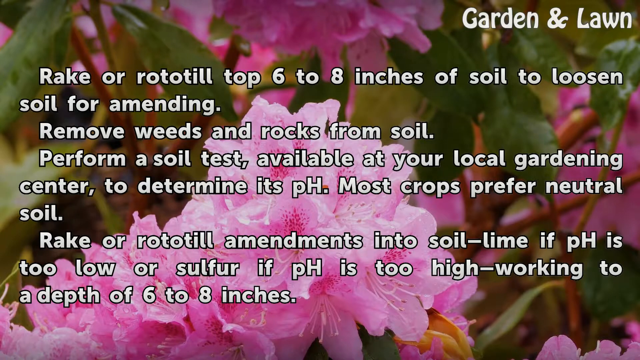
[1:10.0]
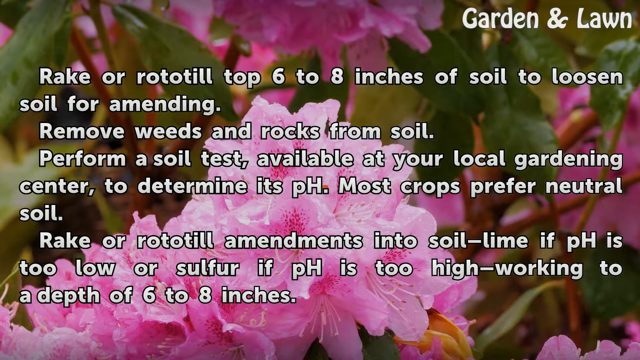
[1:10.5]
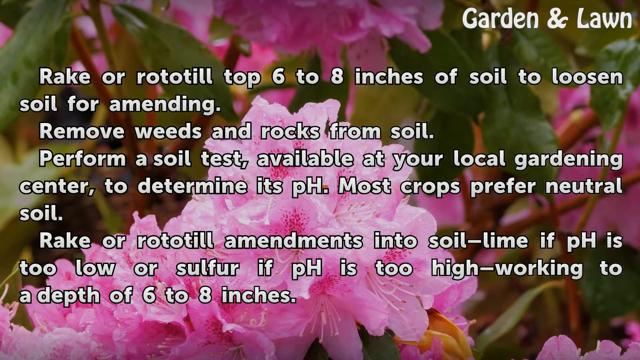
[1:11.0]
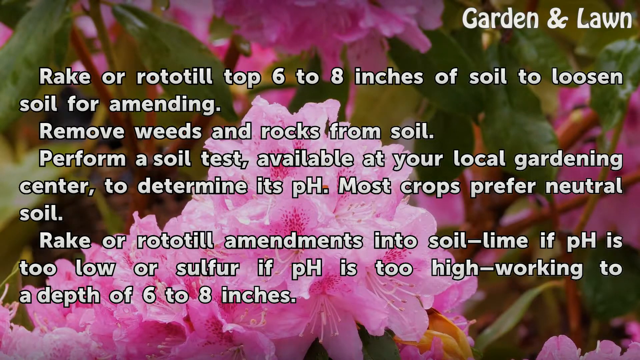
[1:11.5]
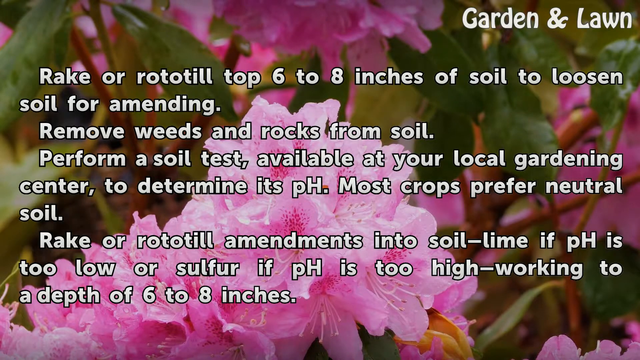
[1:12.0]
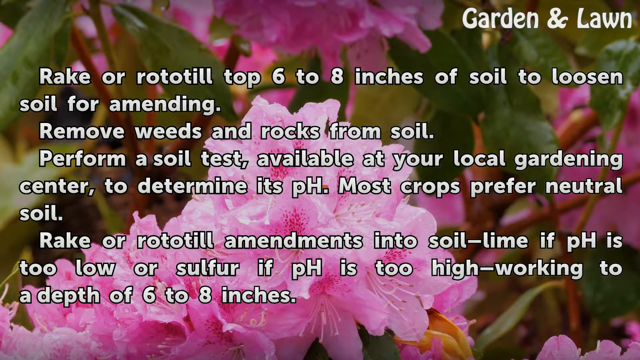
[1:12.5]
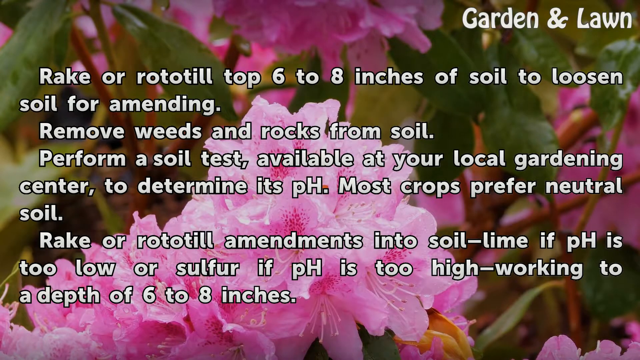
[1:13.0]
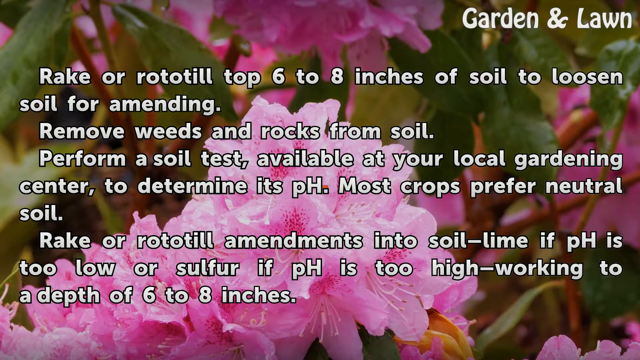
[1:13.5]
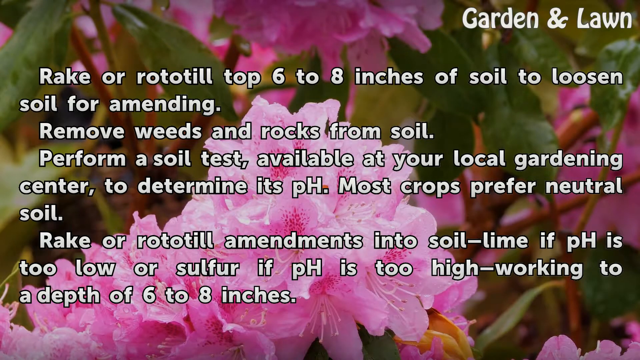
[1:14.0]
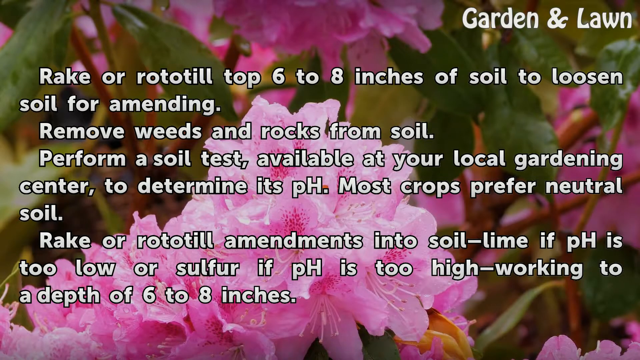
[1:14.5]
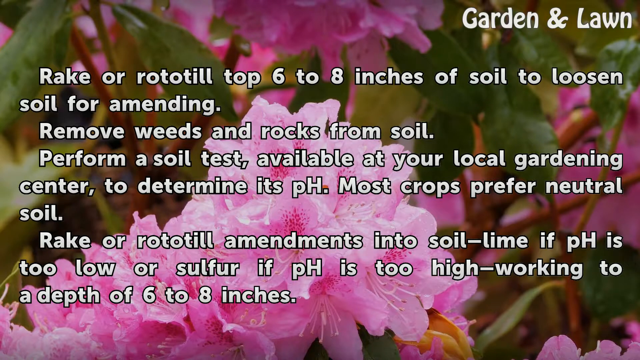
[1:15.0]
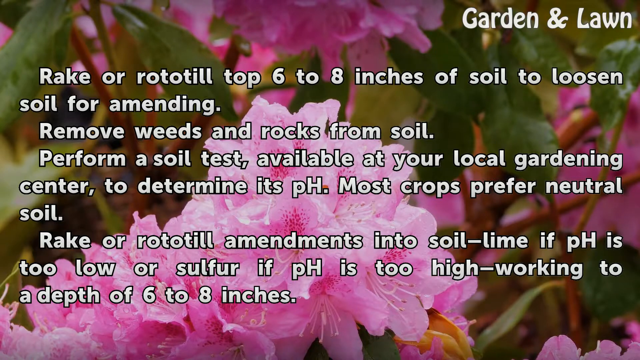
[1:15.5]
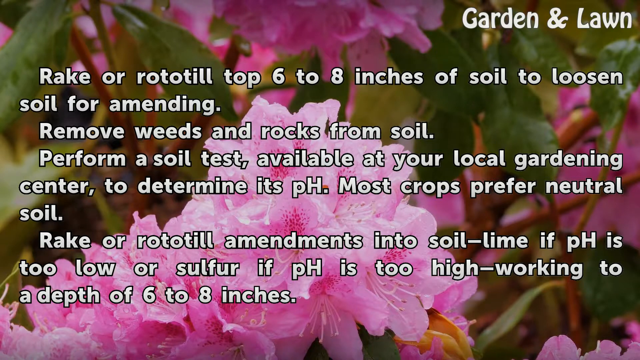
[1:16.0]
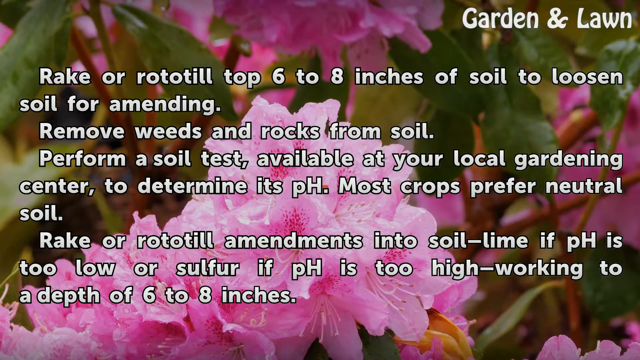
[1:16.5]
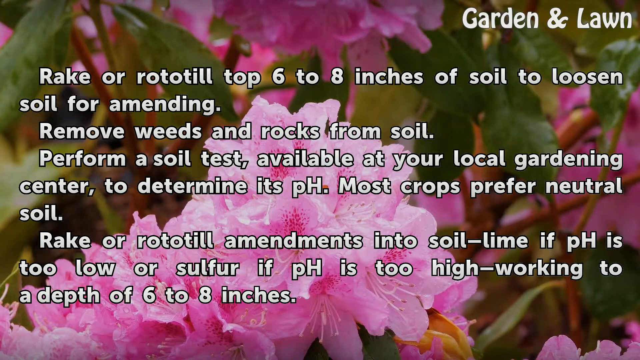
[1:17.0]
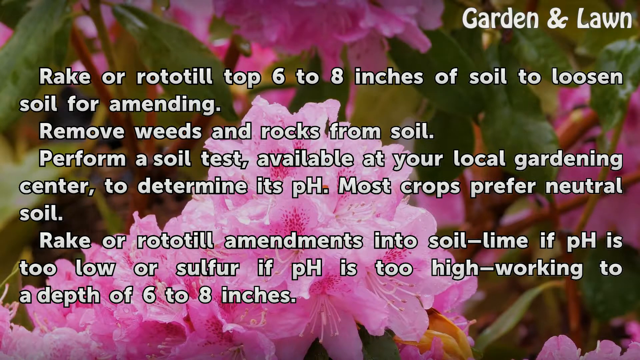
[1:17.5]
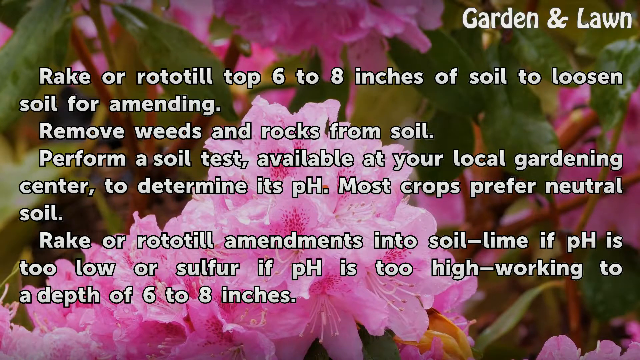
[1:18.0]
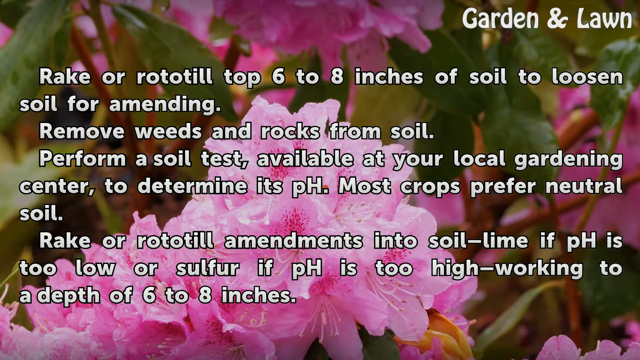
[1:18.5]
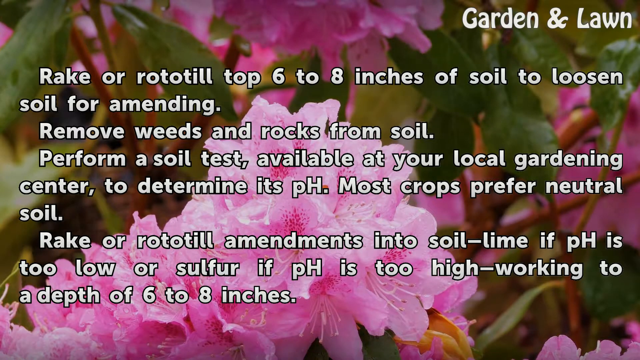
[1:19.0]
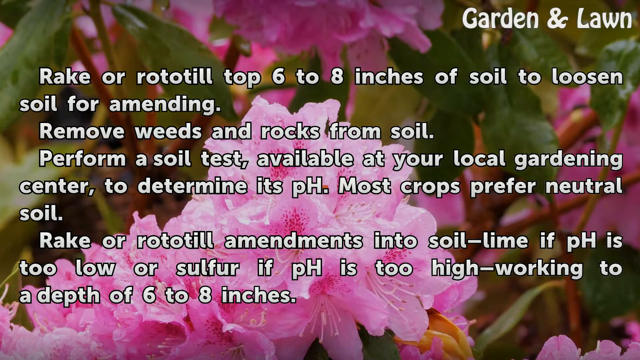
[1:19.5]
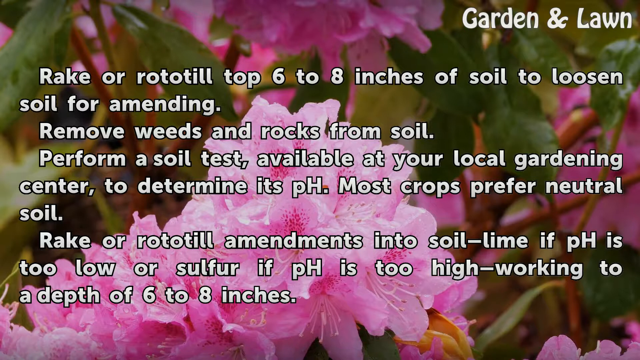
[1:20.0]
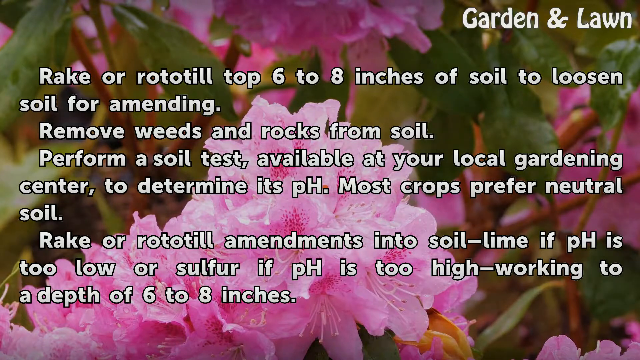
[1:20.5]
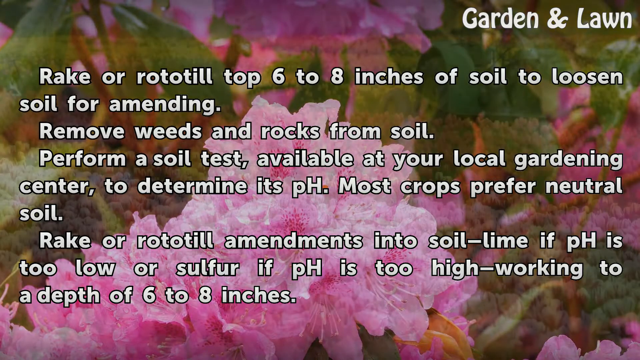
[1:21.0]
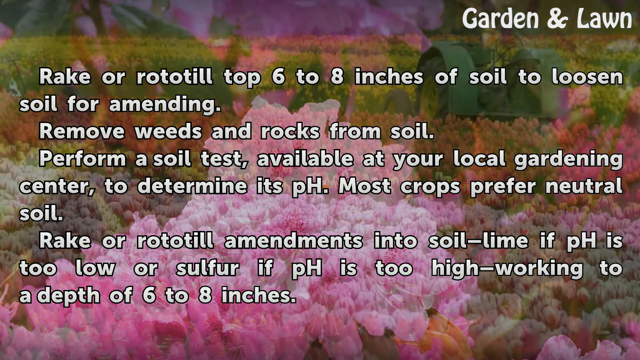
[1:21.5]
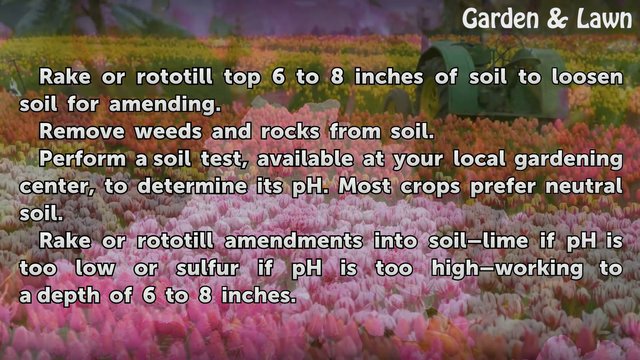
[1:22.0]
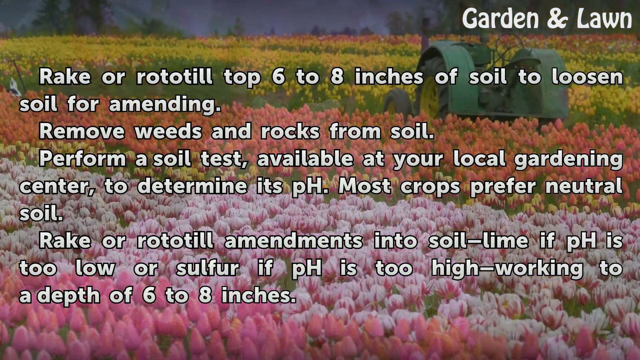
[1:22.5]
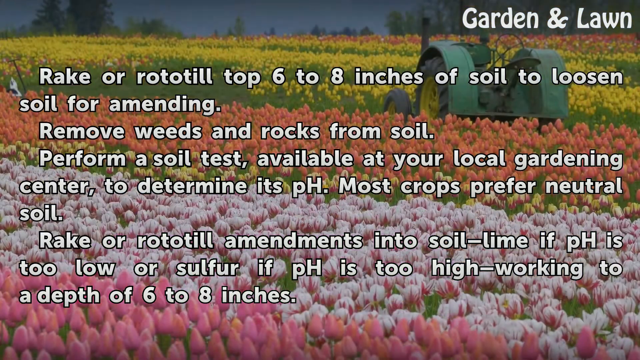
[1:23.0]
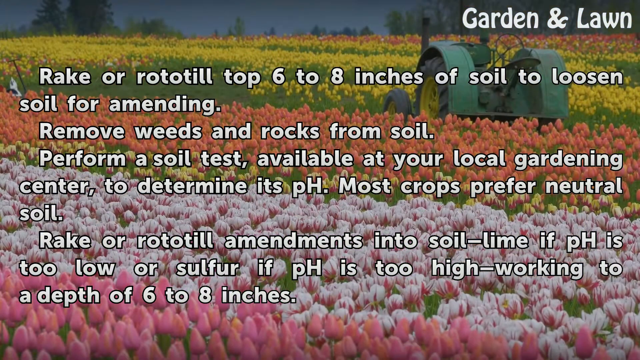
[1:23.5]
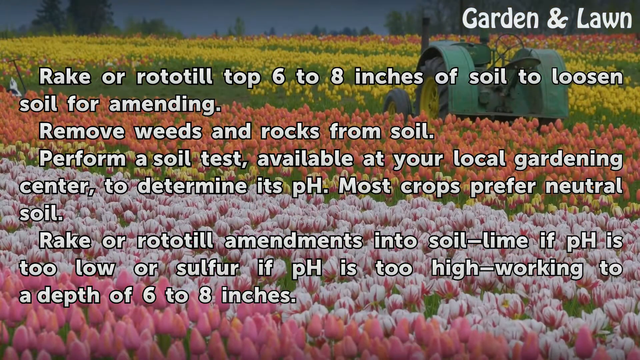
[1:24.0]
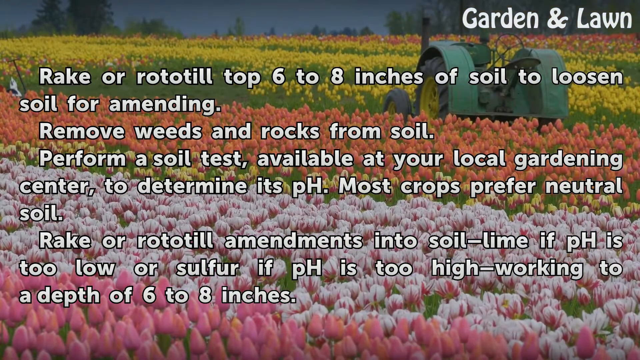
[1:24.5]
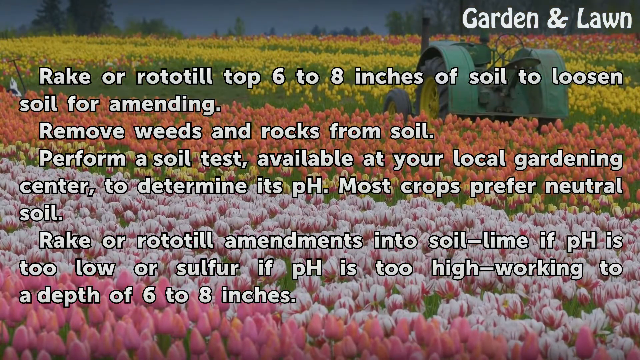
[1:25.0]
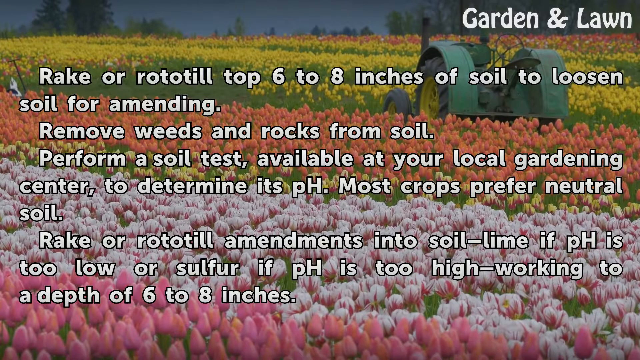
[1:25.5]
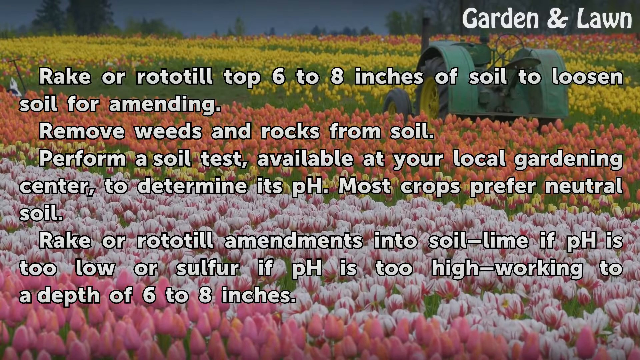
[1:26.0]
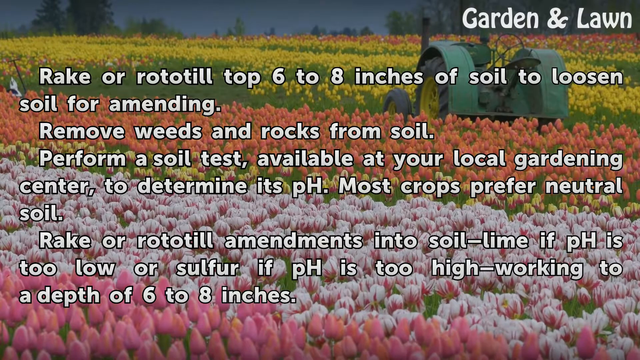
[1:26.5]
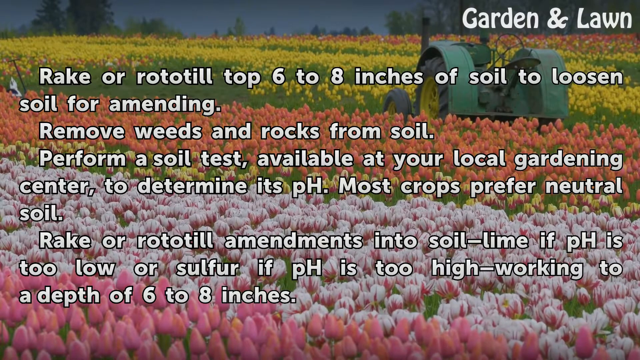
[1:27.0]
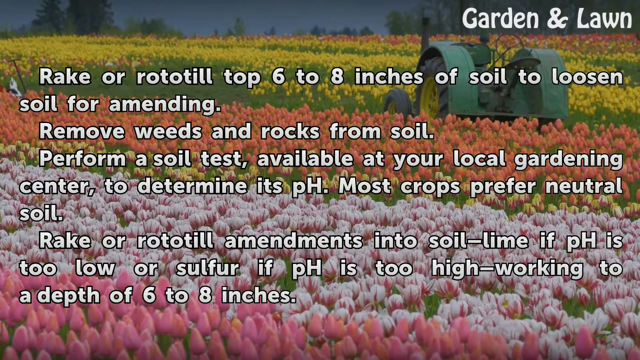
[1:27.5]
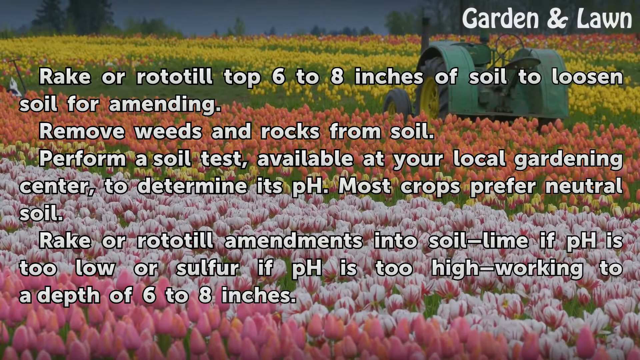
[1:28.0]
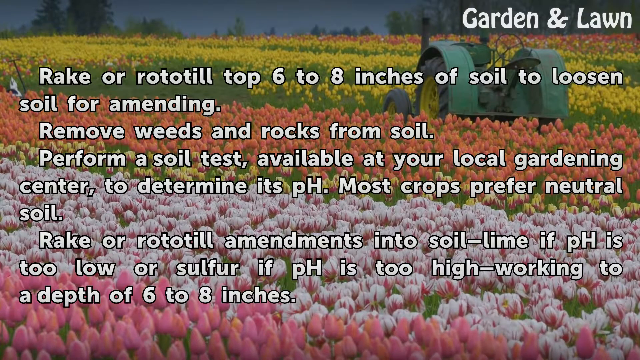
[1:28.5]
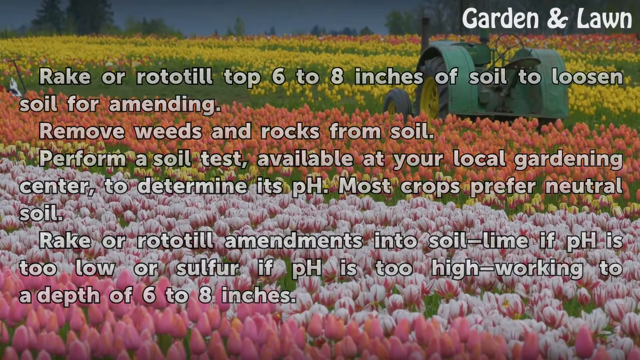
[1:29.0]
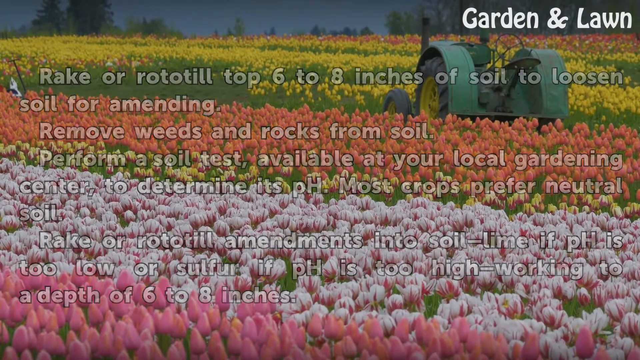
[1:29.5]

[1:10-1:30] The instructions take up the whole of the screen: "rake or rototill top six to eight inches of soil to loosen soil for amending. Remove weeds and rocks from soil, perform a soil test available at your local gardening center to determine its pH. Most crops prefer neutral soil. Rake or rototill amendments into soil, lime if pH is too low or sulfur if pH is too high, working to a depth of six to eight inches." The backdrop changes to a full field of flowers stretching from the foreground to the horizon. In the middle is what seems to be some sort of tractor or harvester with huge wheels at the back, tending to the flowers. In the foreground is a row of pink flowers, in the middle a row of rose-coloured flowers, and from the middle to the horizon lots of yellow flowers. This is a still image rather than the close-ups of individual plants shown before. The text fades slowly from view, leaving the view of the field.